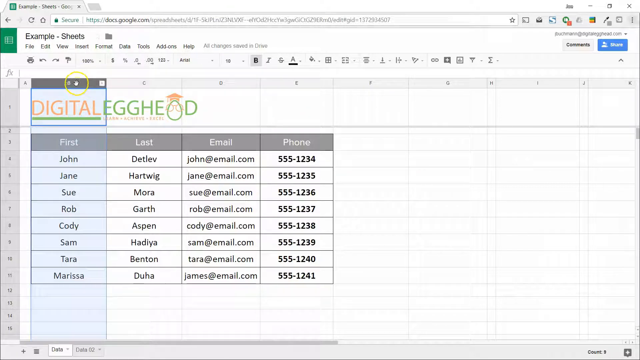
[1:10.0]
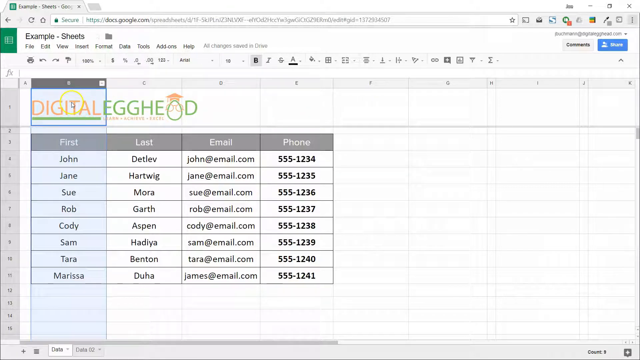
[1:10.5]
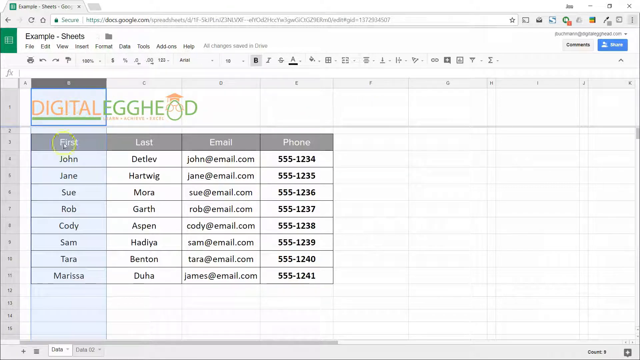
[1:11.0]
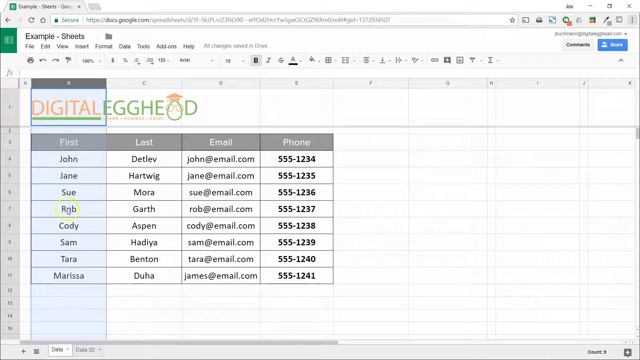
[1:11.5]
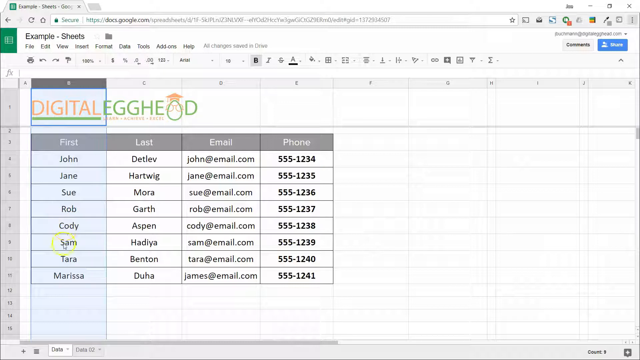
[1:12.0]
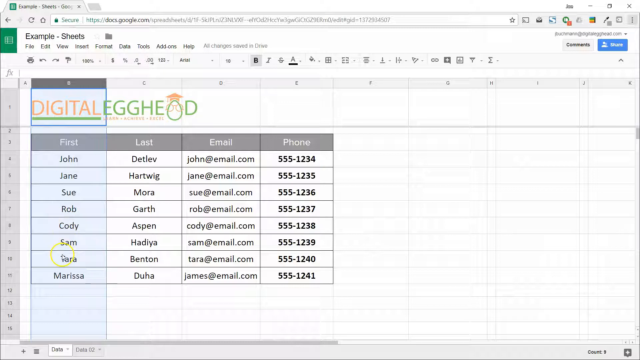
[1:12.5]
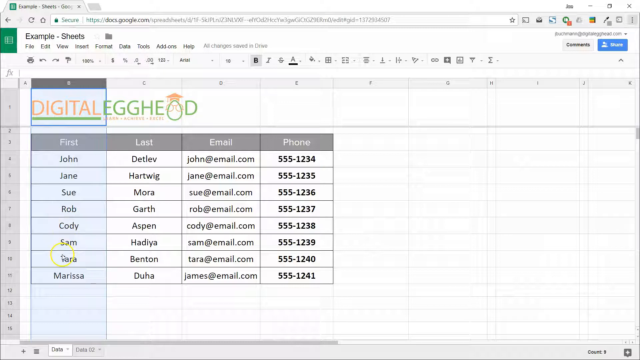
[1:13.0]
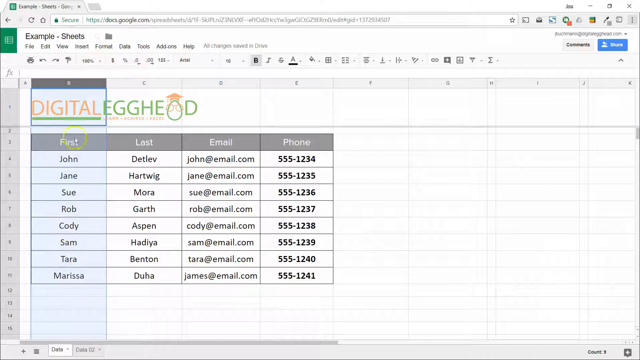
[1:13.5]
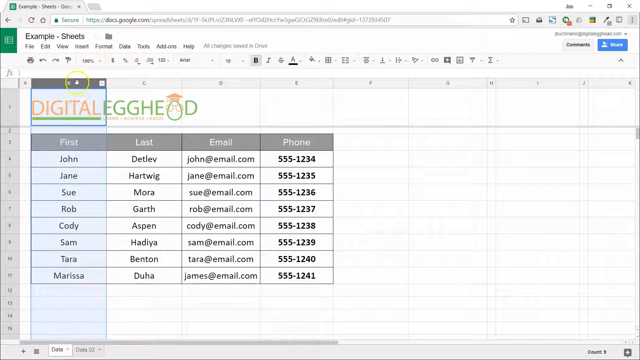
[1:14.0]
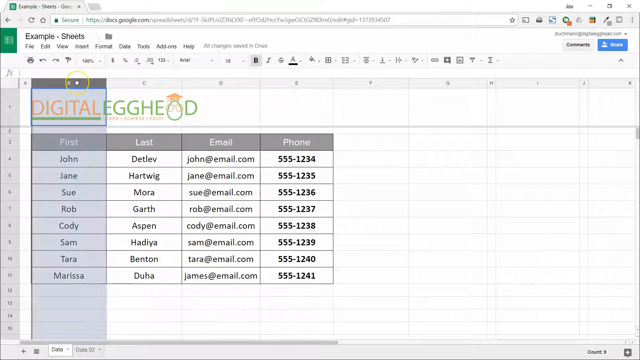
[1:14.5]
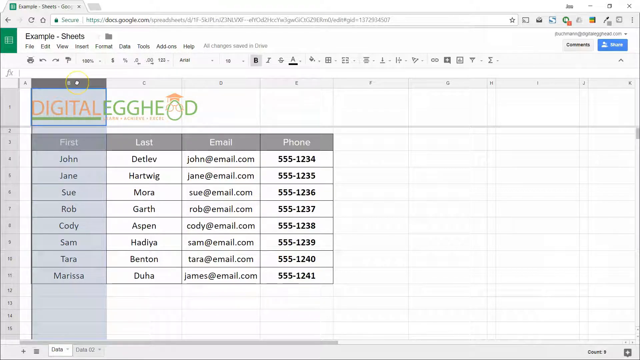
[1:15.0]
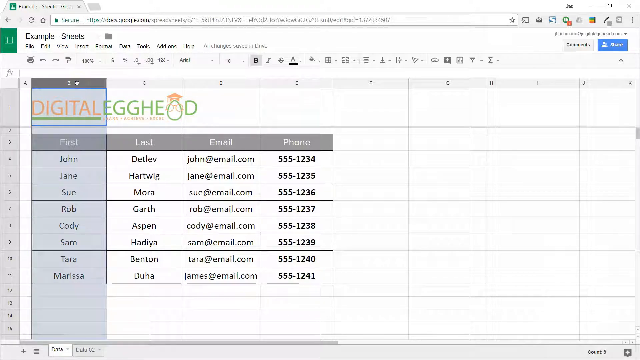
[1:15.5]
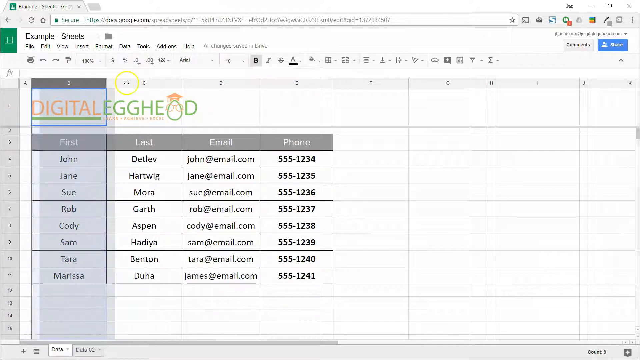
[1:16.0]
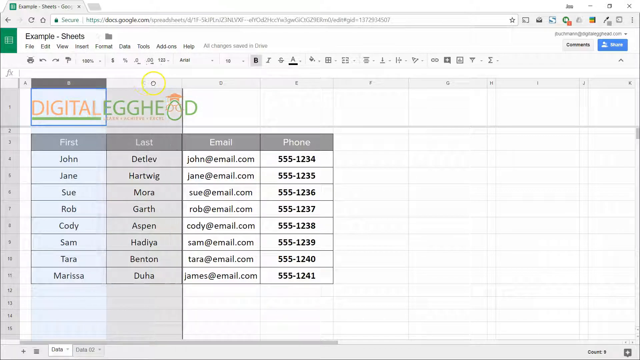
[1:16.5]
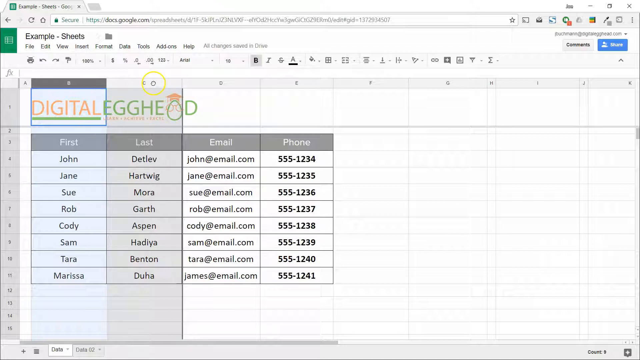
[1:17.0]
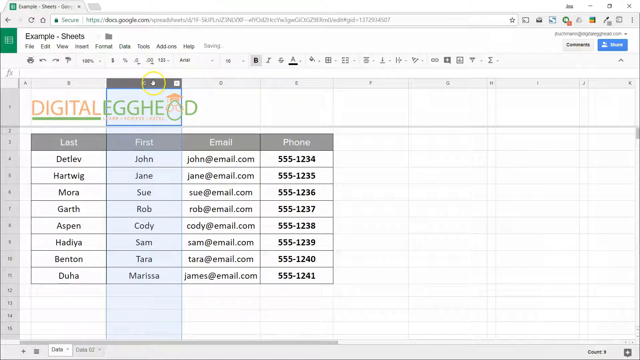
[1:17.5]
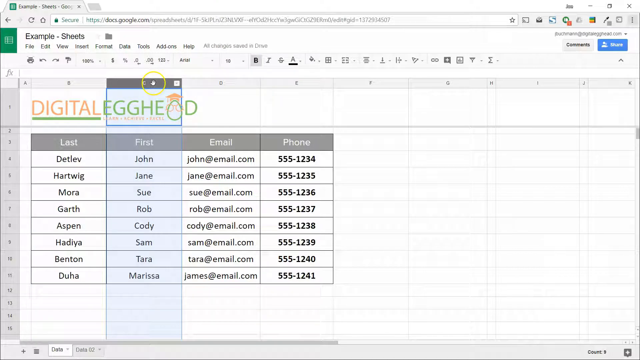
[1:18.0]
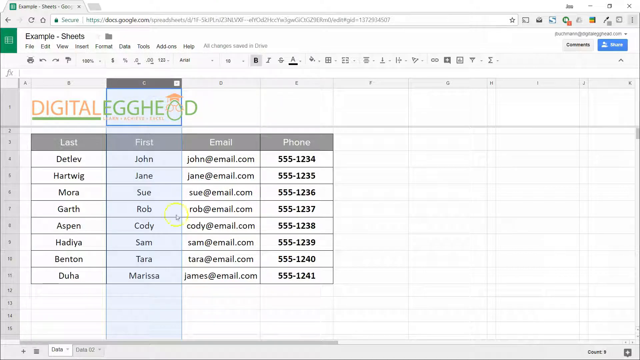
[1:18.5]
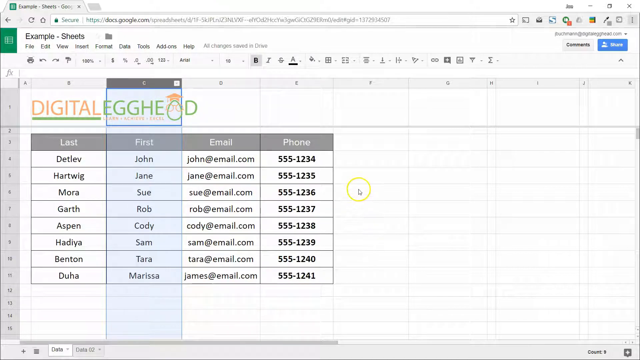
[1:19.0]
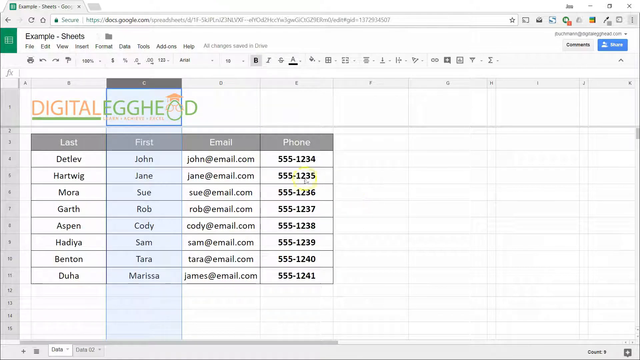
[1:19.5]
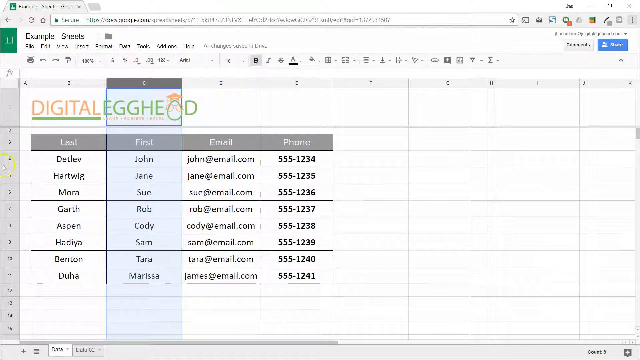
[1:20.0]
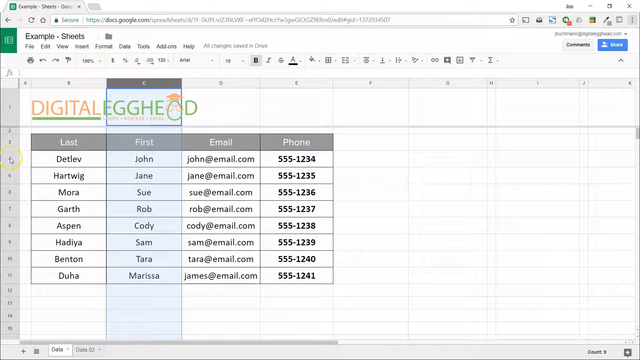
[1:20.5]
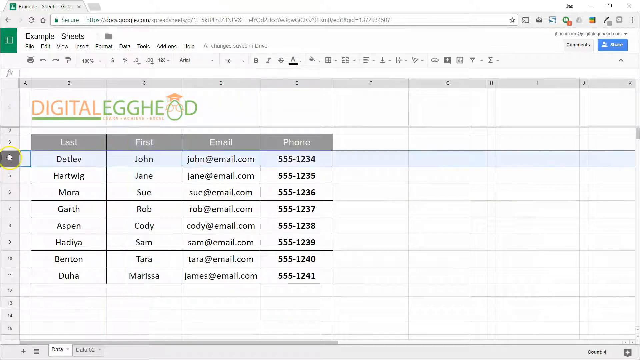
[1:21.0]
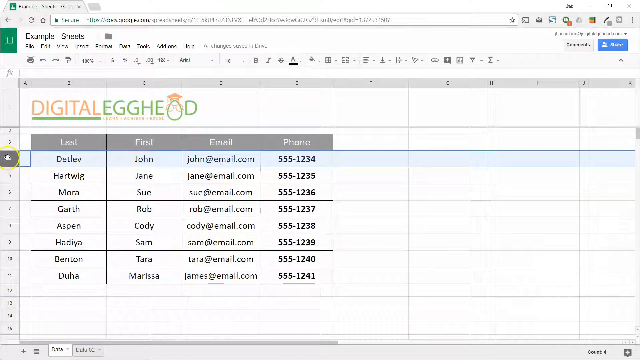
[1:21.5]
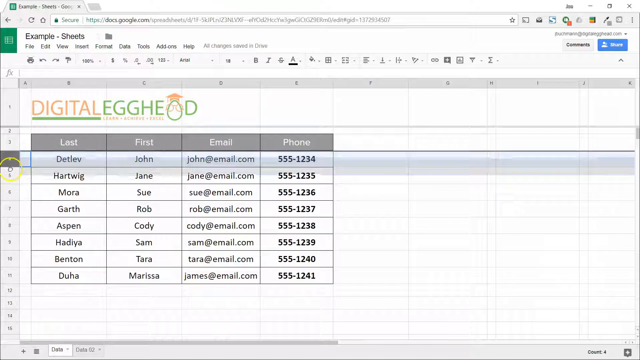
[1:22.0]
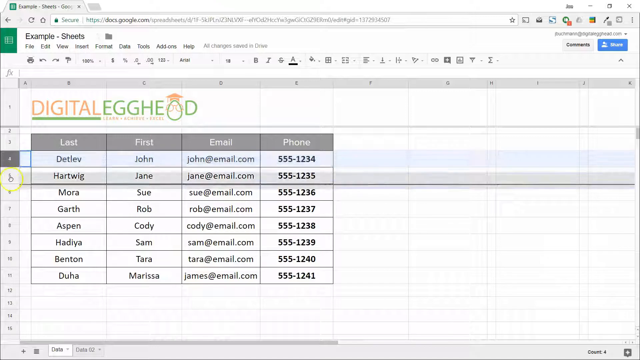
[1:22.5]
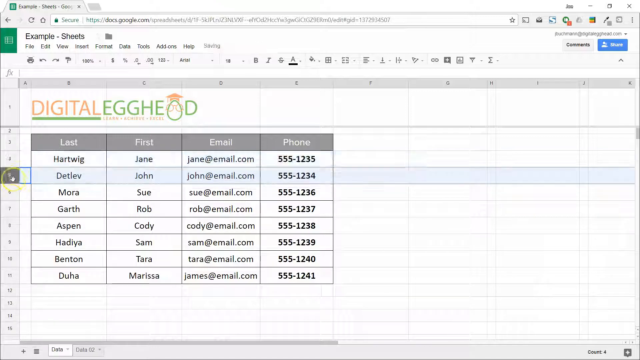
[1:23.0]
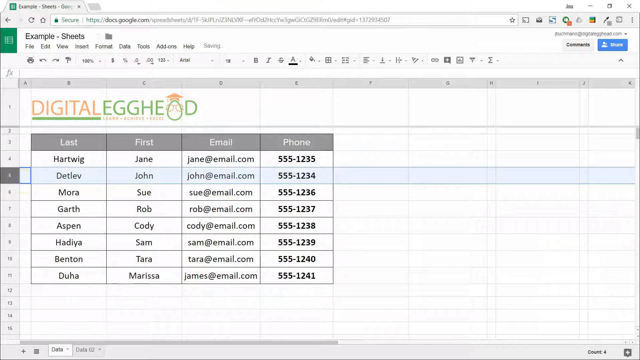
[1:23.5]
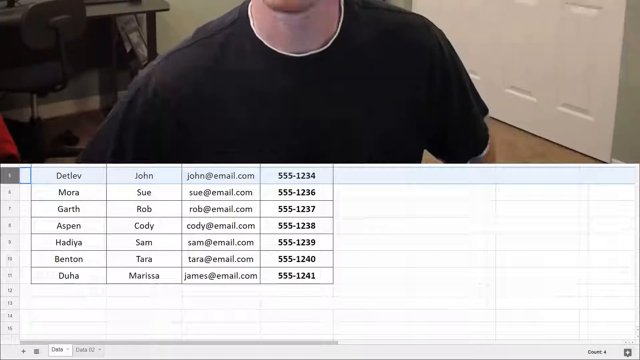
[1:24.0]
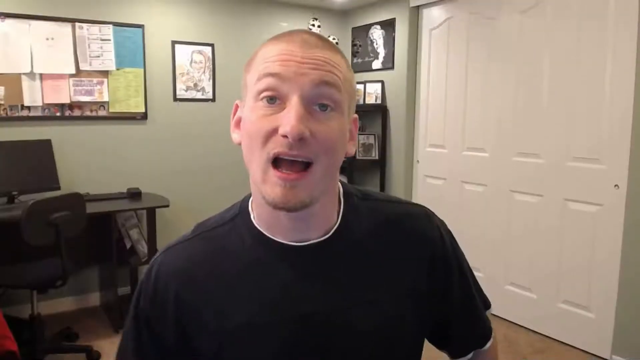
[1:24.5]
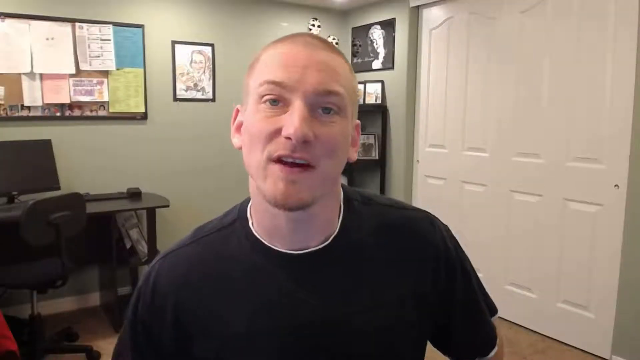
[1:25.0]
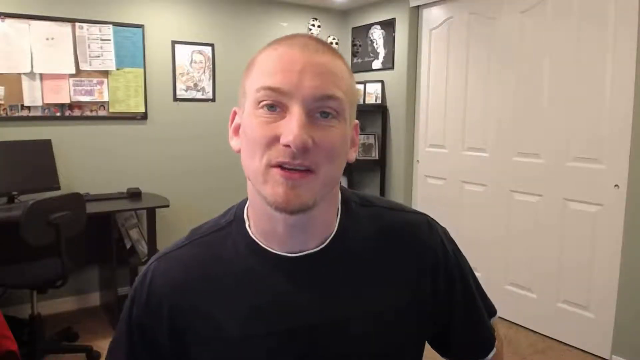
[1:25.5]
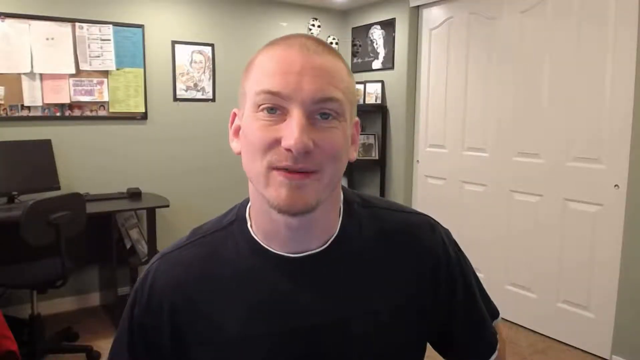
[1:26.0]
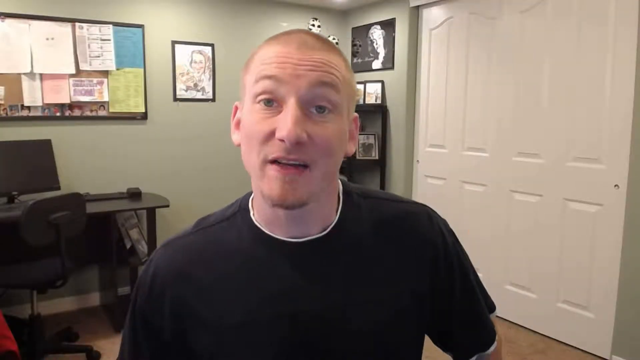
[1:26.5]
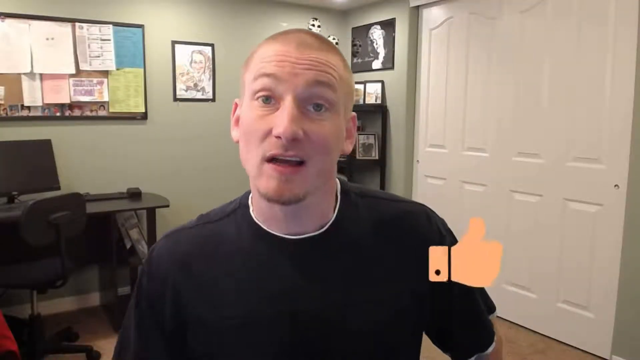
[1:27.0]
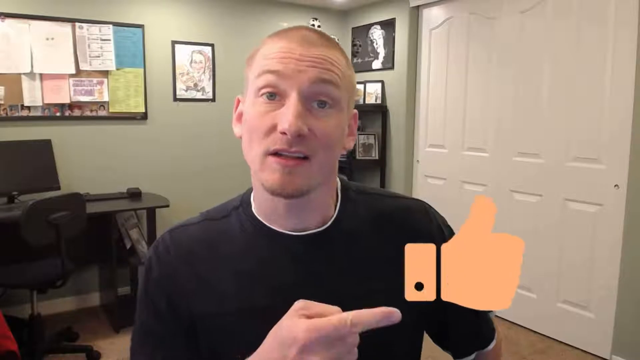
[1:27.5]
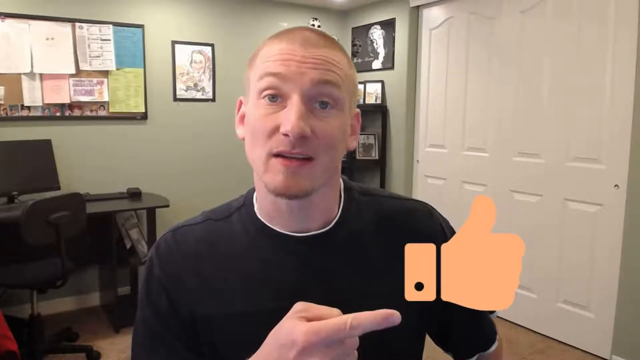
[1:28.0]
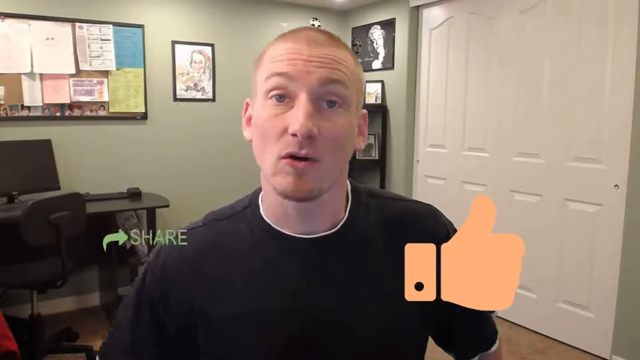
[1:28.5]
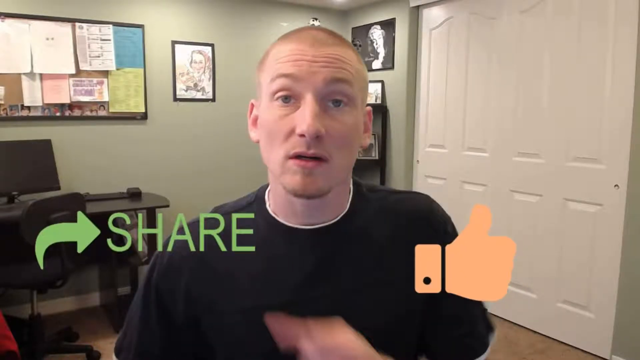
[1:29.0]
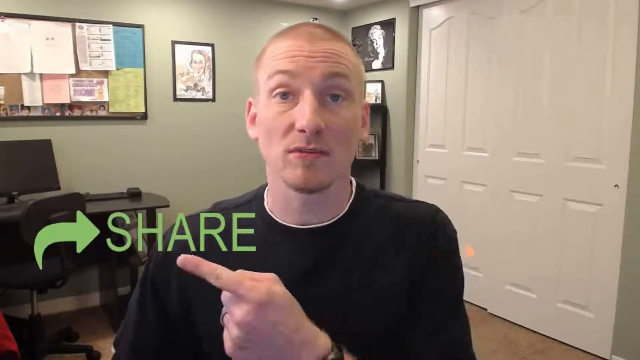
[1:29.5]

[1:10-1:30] A website is pulled up on the screen, with "Digital Egghead" shown near the top. Below it is a chart with various information and a label row at the top reading "first, last, email, phone," with entries listed in the boxes below. Someone clicks on different areas; the pointer has a yellow circle around it, which appears to highlight some of the information on the screen. As the pointer moves across the information, a white-blue area pops up over different areas. The video then shows a man wearing a black shirt speaking directly into the camera, and a thumbs-up and a share pop up on the screen.